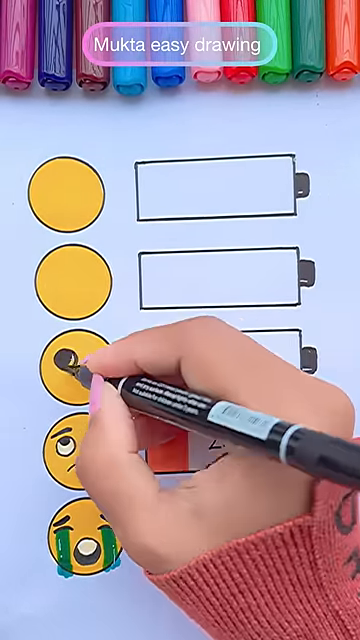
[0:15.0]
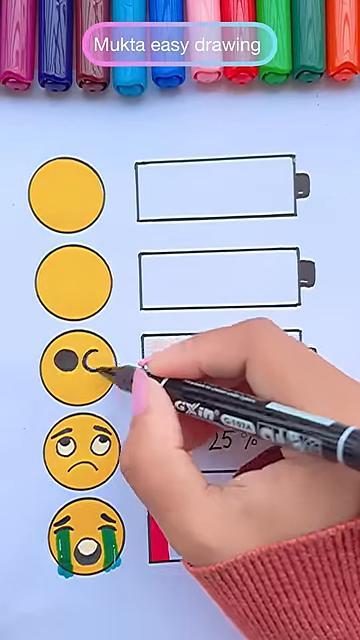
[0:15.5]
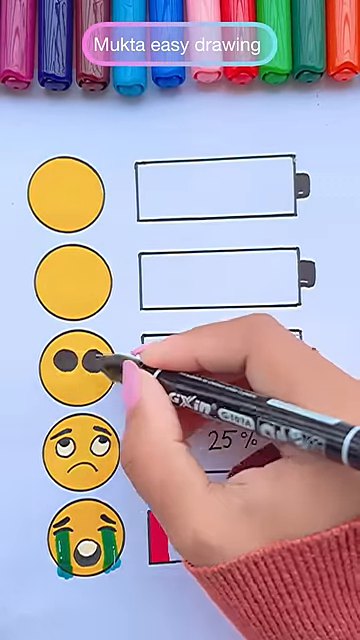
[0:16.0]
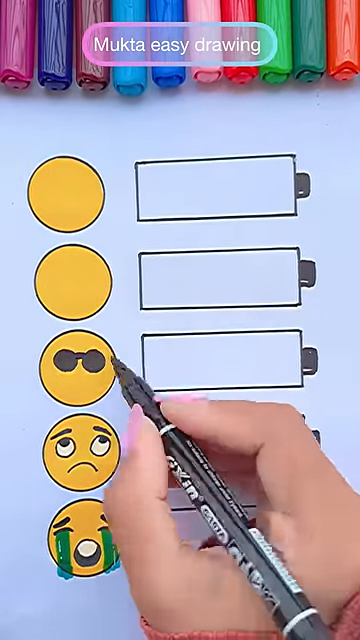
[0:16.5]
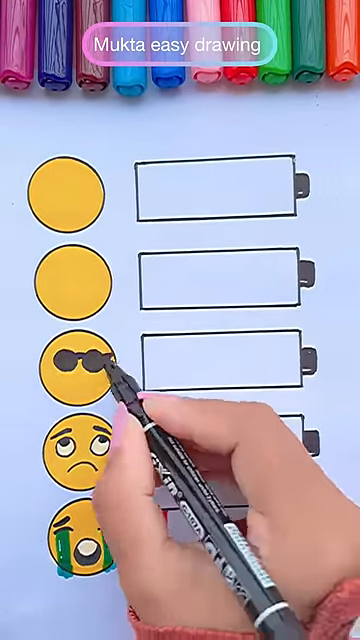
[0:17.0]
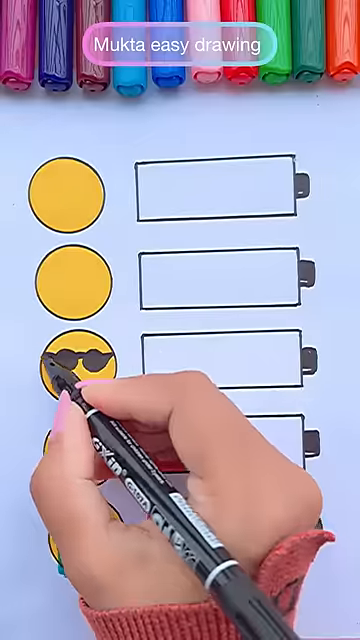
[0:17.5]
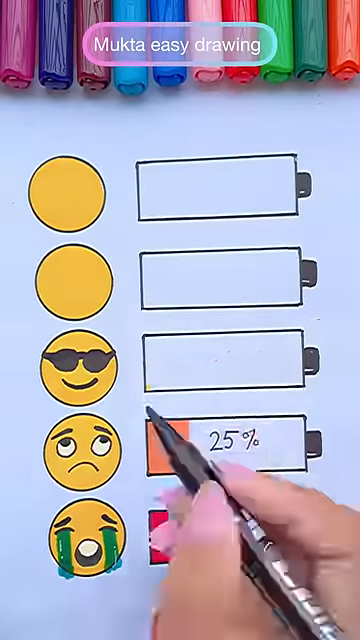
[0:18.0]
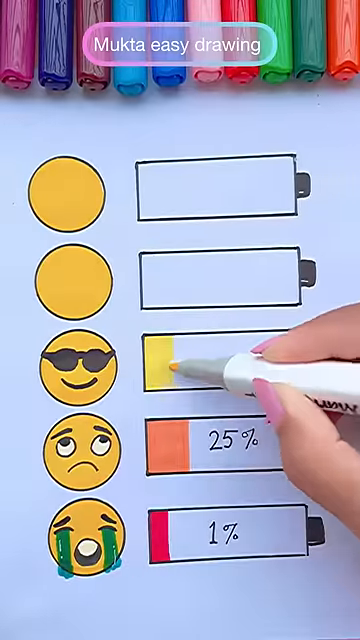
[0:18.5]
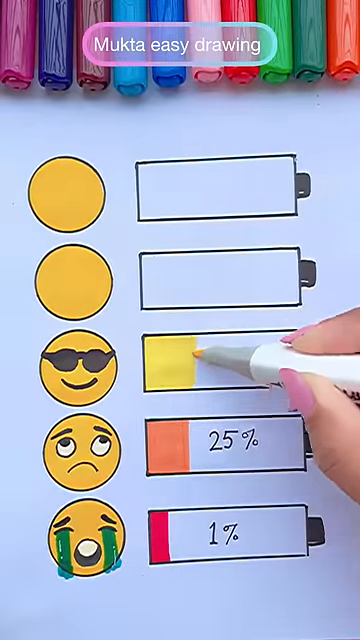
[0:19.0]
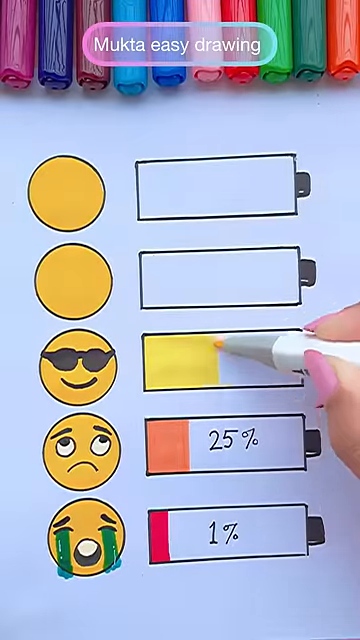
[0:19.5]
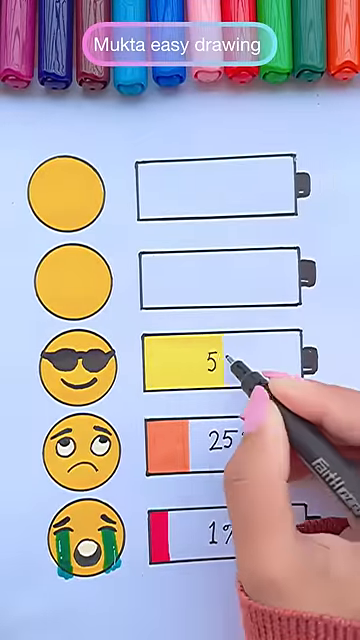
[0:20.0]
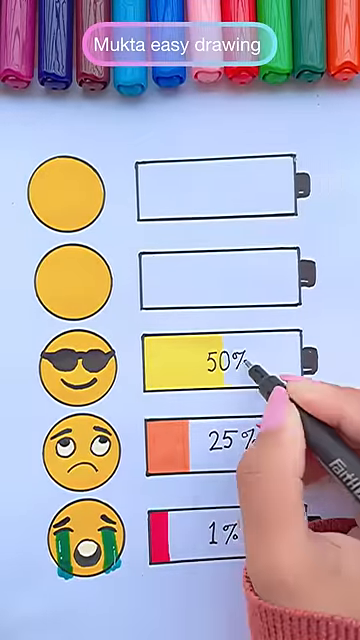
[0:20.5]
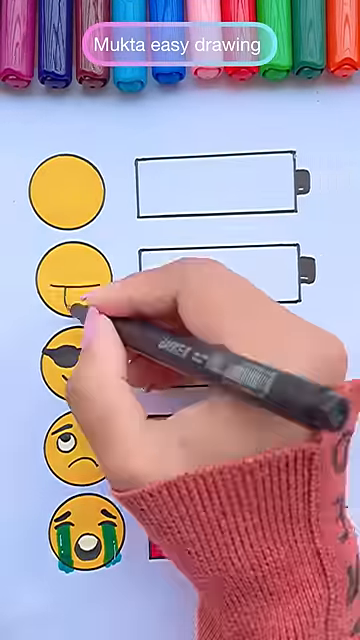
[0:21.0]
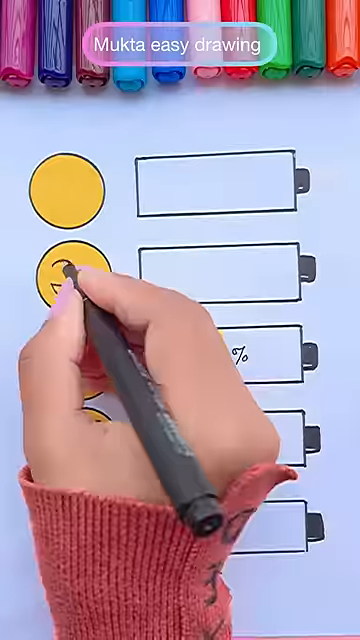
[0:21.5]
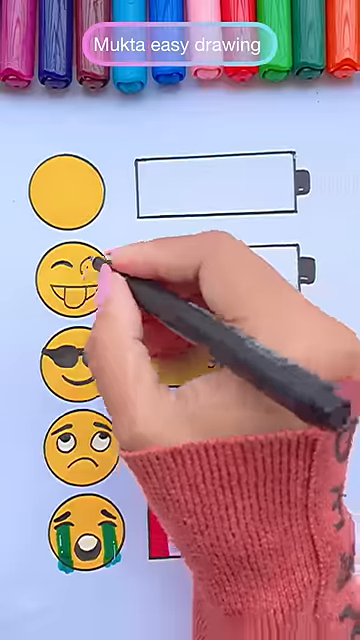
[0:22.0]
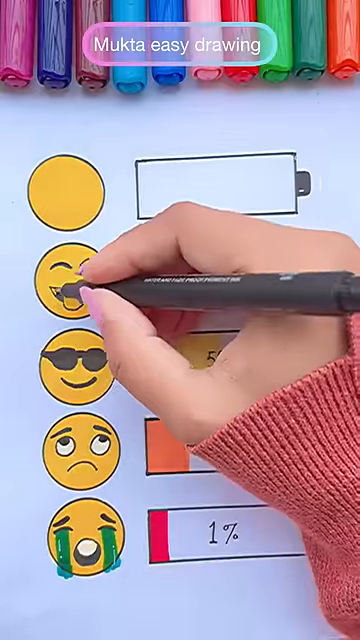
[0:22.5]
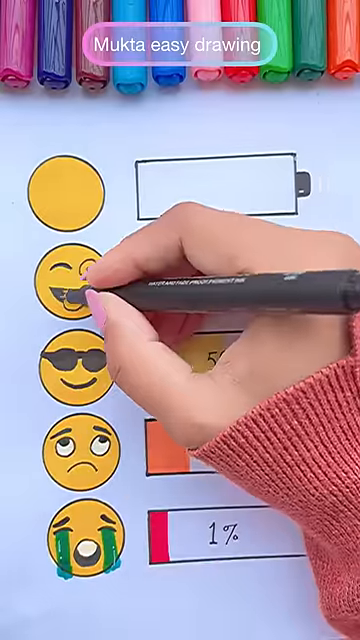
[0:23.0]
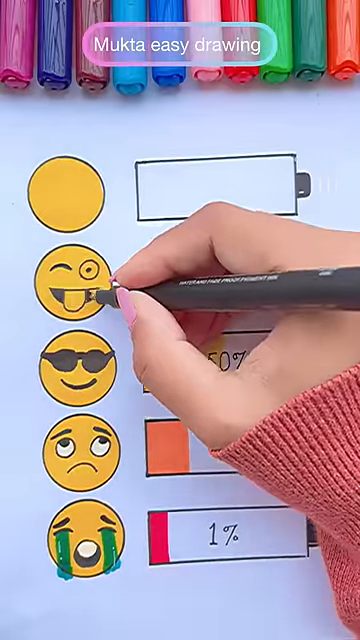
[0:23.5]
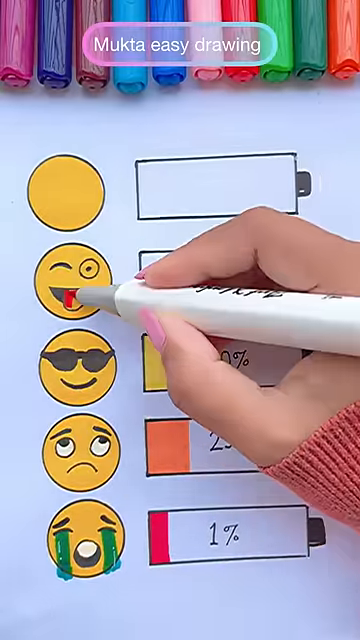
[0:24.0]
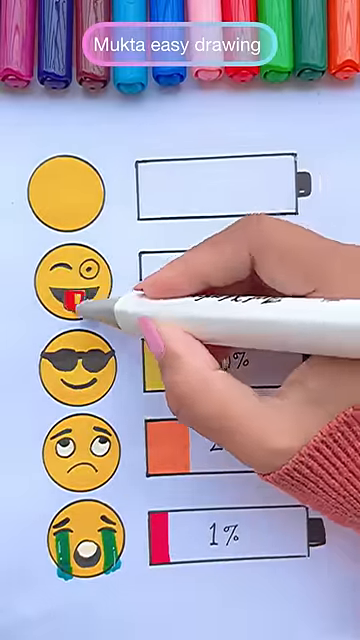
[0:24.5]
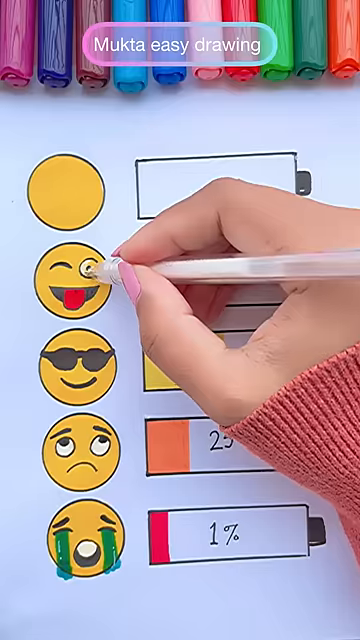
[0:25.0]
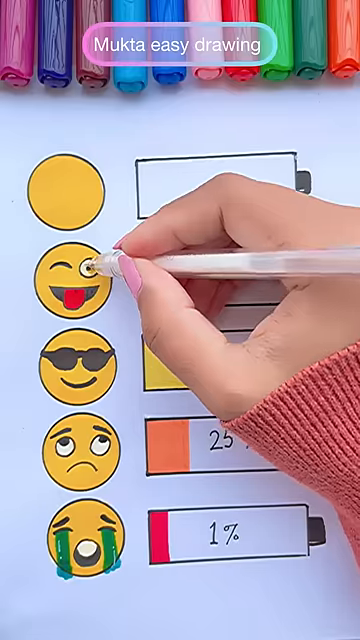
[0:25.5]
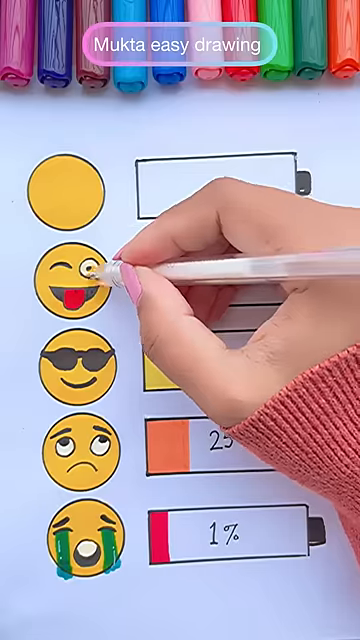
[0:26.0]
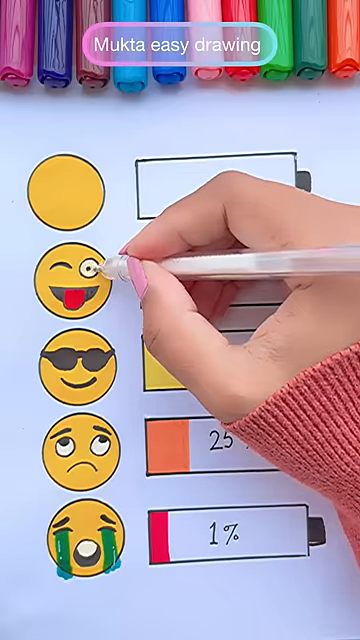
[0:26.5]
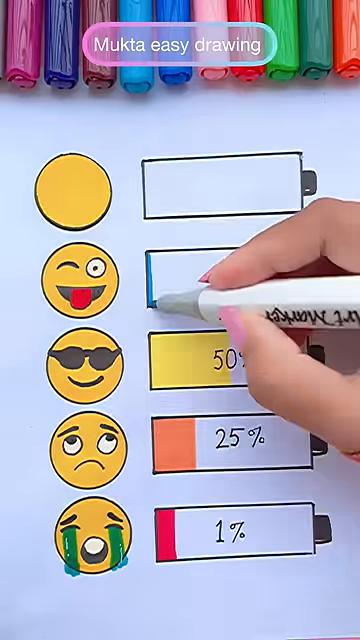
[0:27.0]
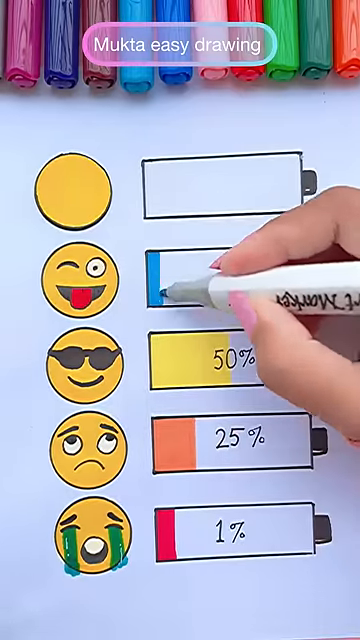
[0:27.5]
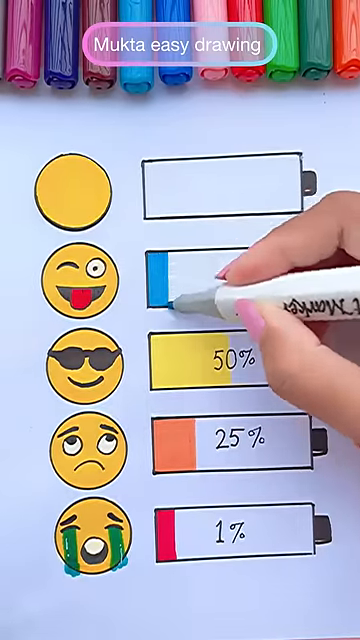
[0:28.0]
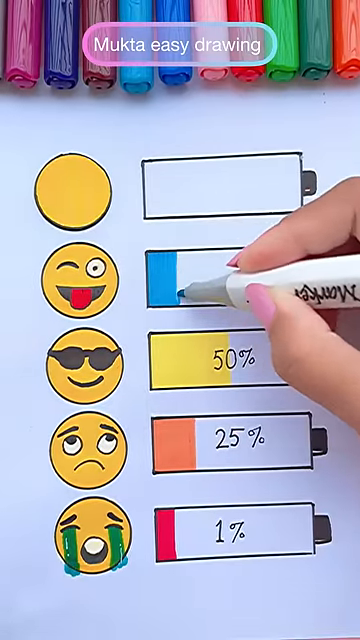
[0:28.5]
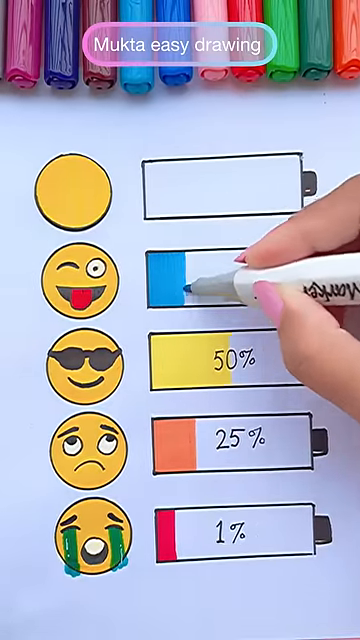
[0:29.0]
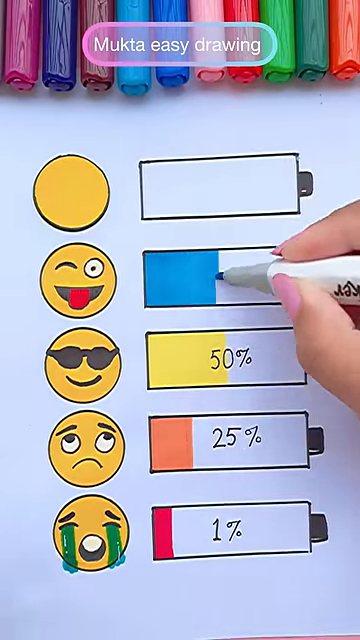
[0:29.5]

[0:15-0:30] The same hand works on the piece of paper with yellow circles to the left of drawings of batteries. The bottom one has a crying emoji and "1%" on the battery; the second has a frowning, eye-rolling emoji with 25% of the battery left. The hand draws a smiling emoji with sunglasses, fills in 50%, about half of the battery, with yellow, and writes "50%" on the battery. On the next one up, the hand draws a silly face with one eye closed and one eye open, smiling with its tongue out. The hand draws on that battery in sort of an aqua blue color; the blue fills a little more than half of the battery when the video cuts off, before the hand finishes and before a percentage number is written.